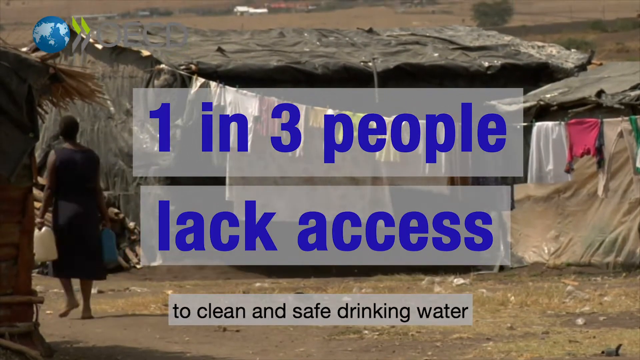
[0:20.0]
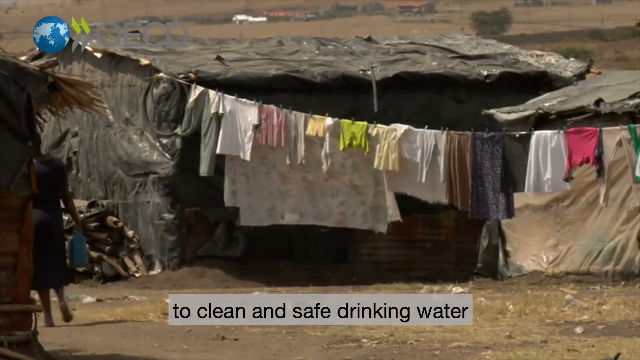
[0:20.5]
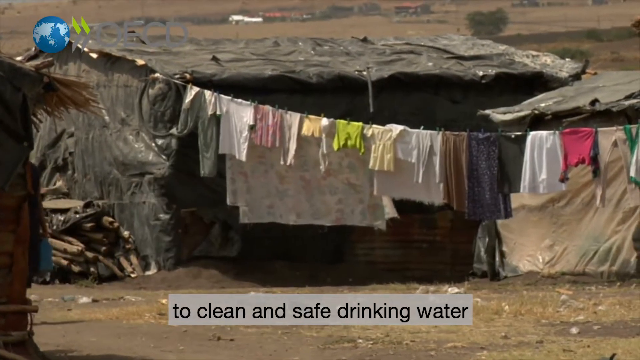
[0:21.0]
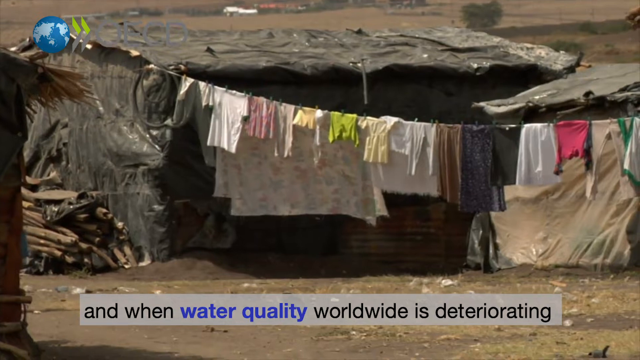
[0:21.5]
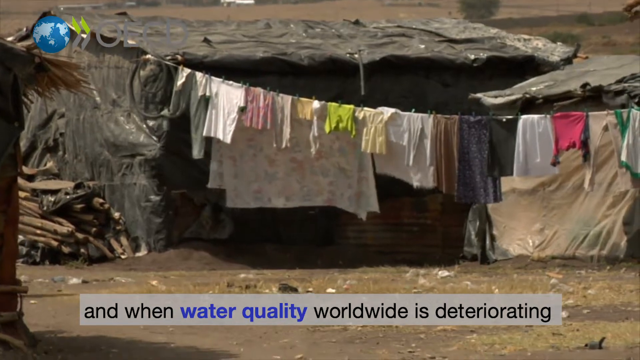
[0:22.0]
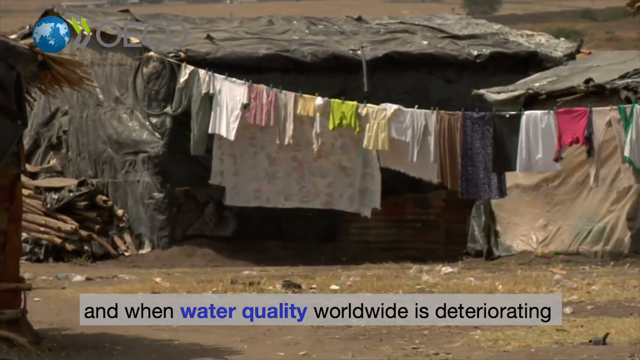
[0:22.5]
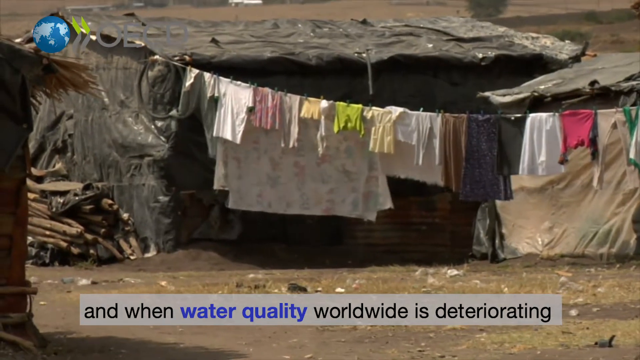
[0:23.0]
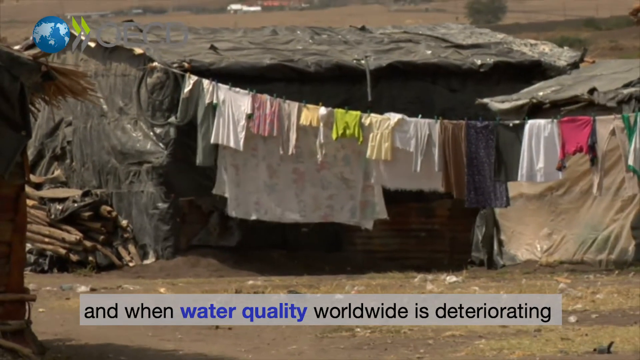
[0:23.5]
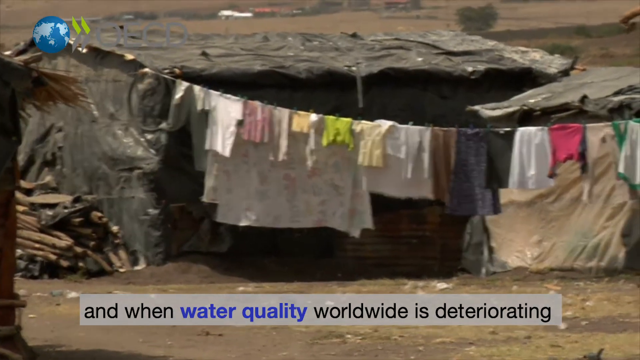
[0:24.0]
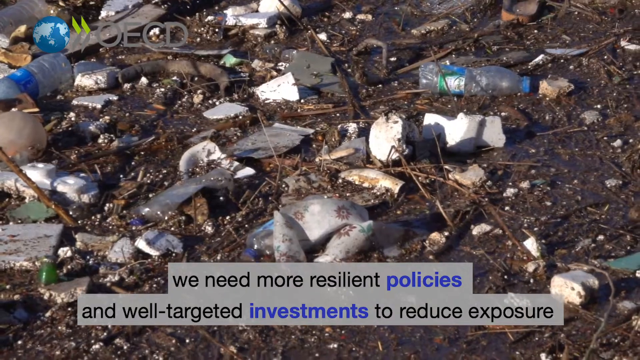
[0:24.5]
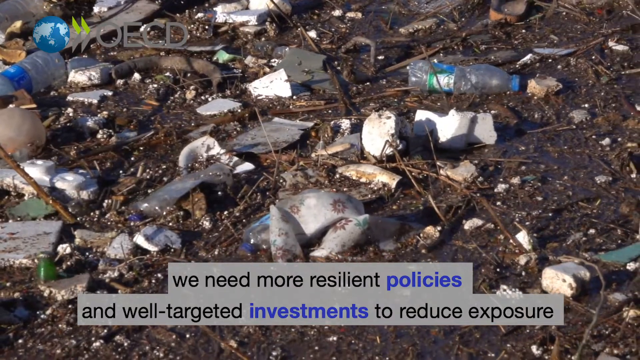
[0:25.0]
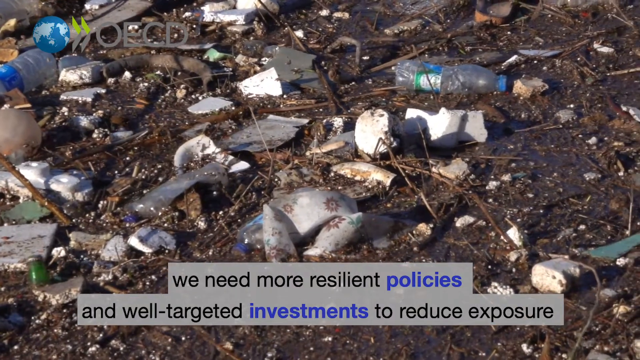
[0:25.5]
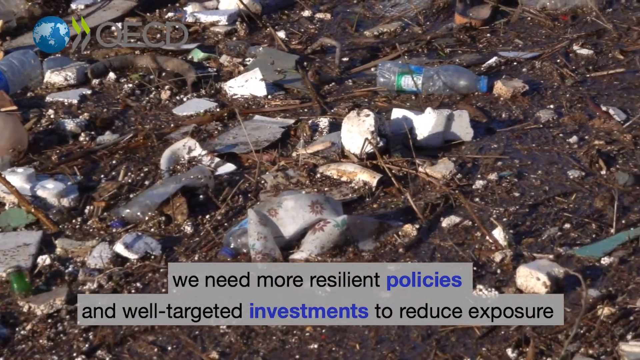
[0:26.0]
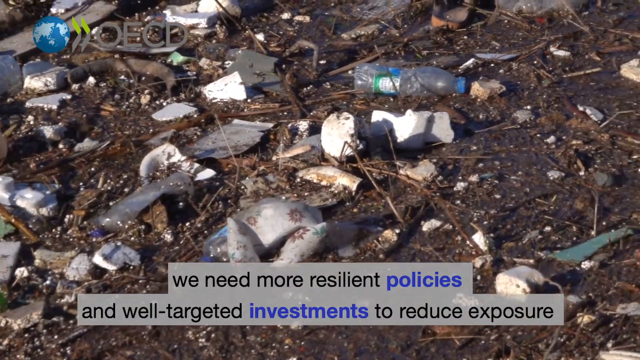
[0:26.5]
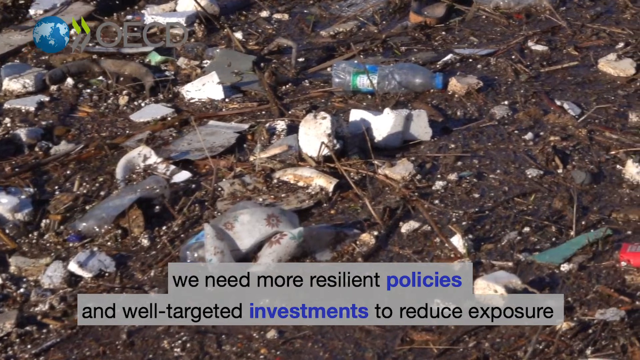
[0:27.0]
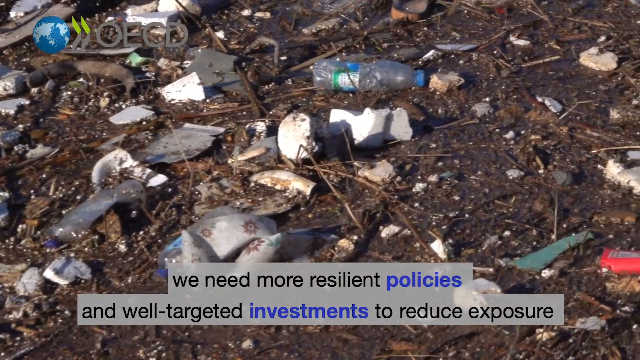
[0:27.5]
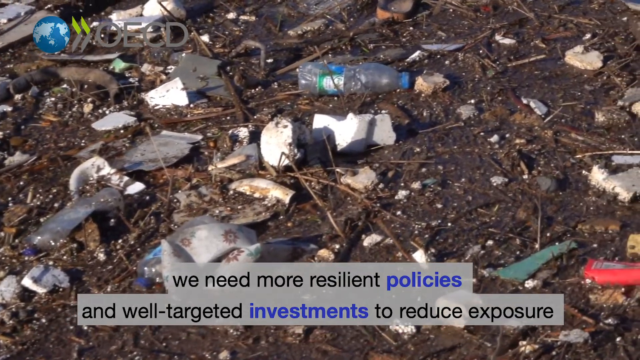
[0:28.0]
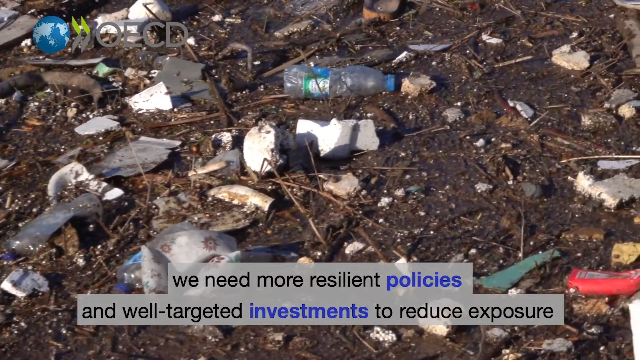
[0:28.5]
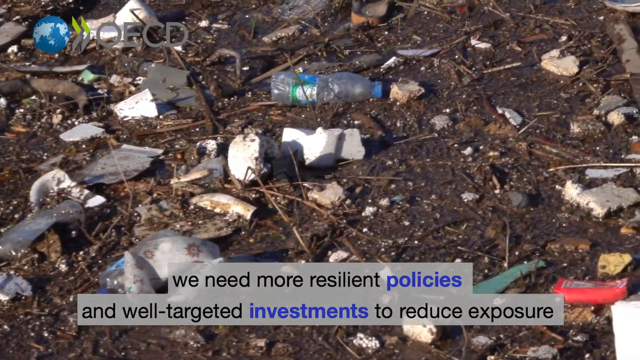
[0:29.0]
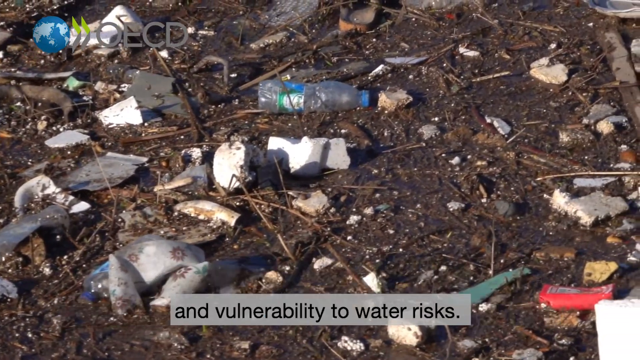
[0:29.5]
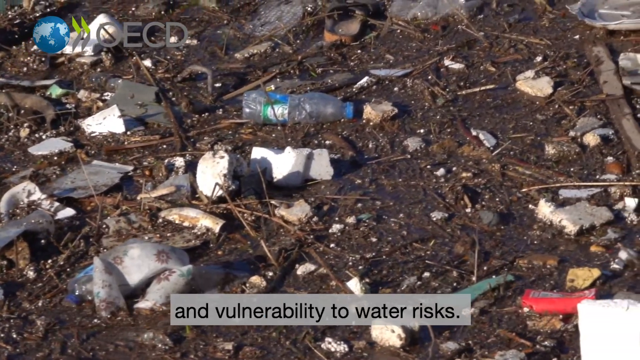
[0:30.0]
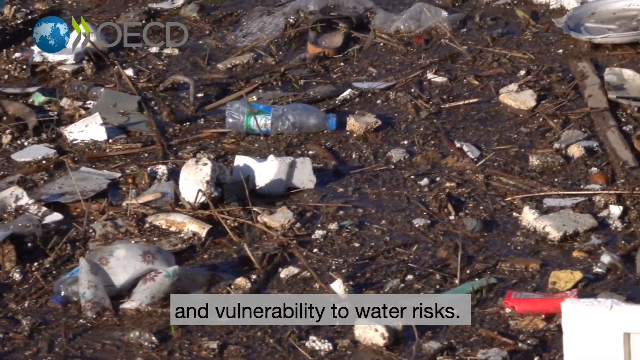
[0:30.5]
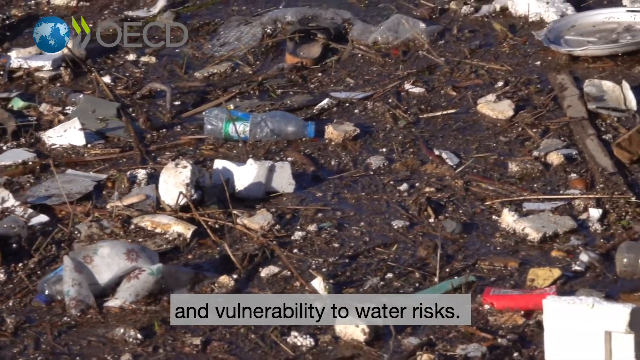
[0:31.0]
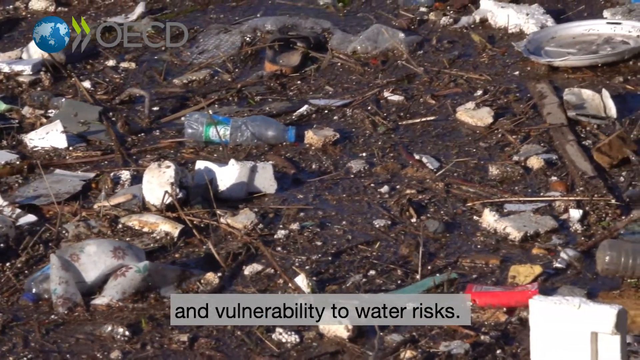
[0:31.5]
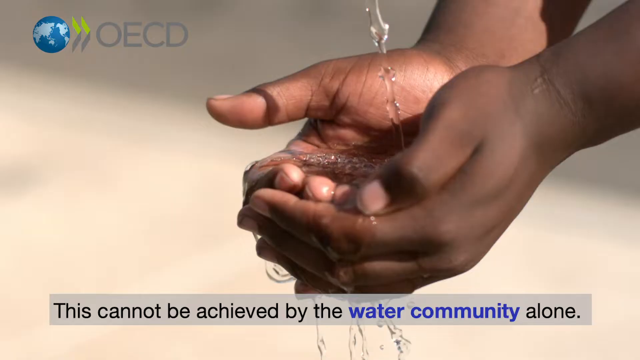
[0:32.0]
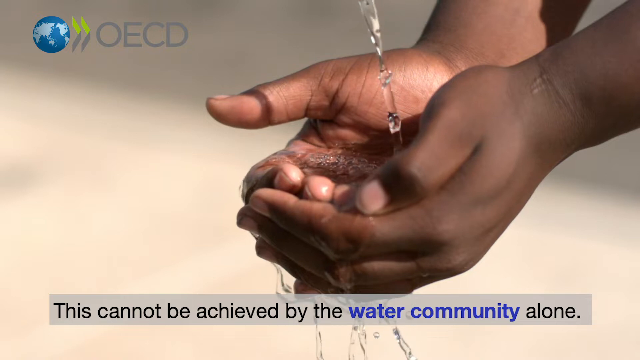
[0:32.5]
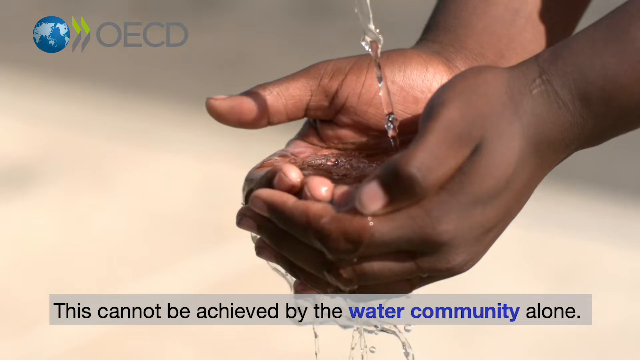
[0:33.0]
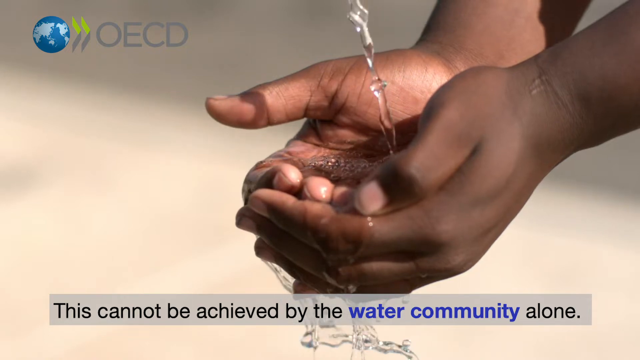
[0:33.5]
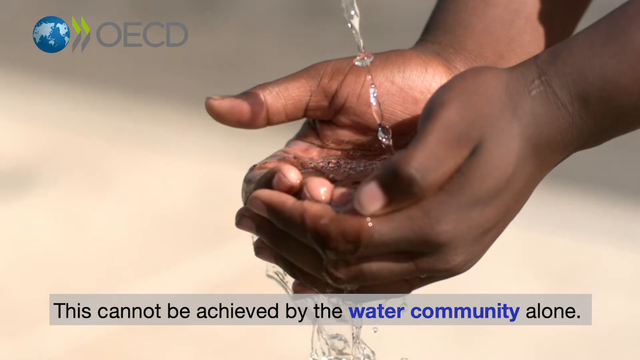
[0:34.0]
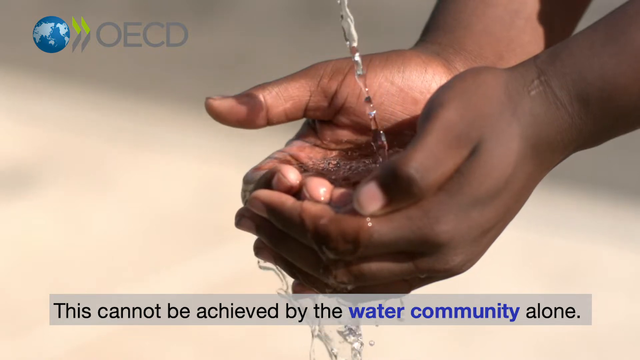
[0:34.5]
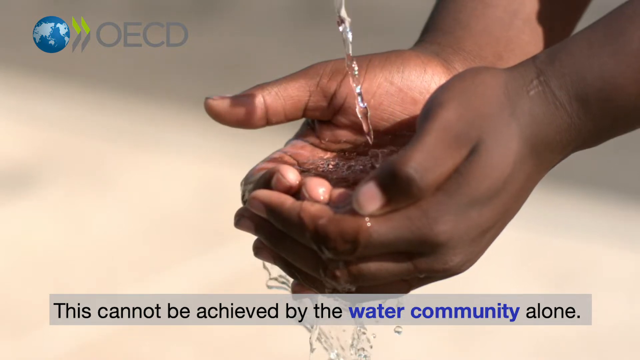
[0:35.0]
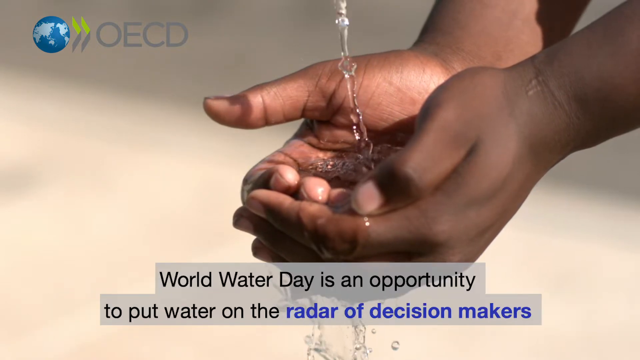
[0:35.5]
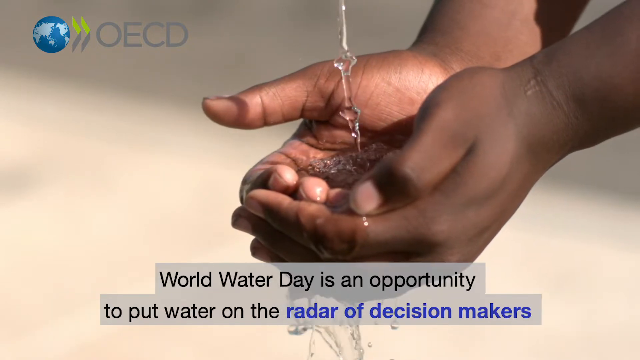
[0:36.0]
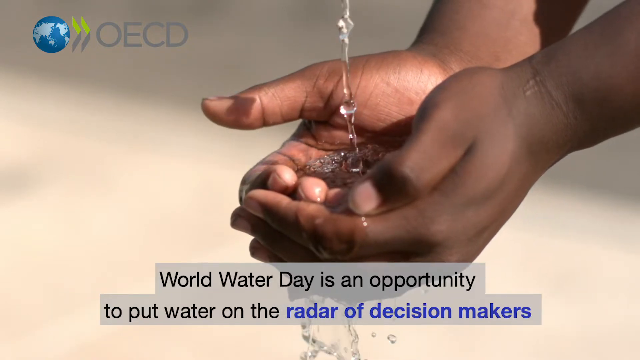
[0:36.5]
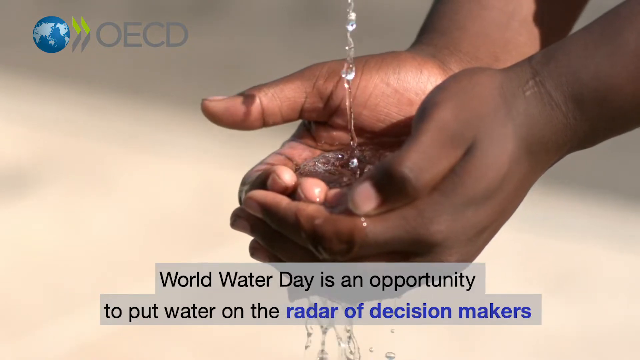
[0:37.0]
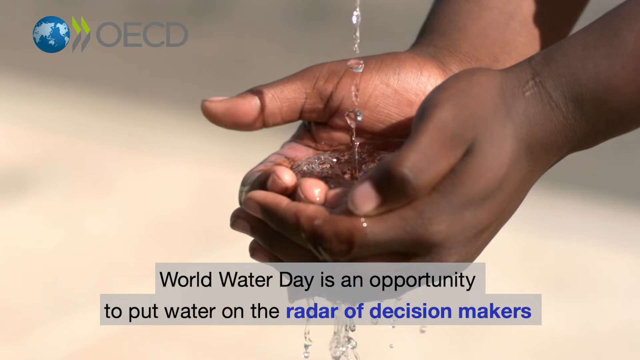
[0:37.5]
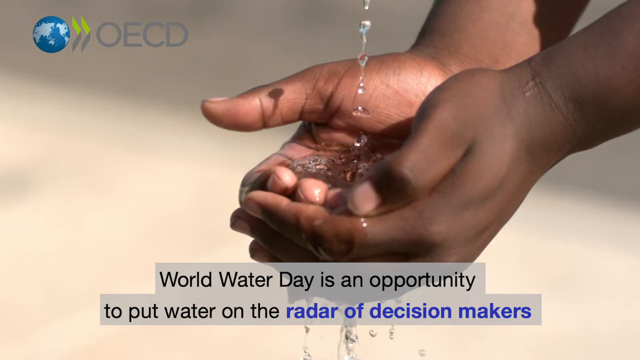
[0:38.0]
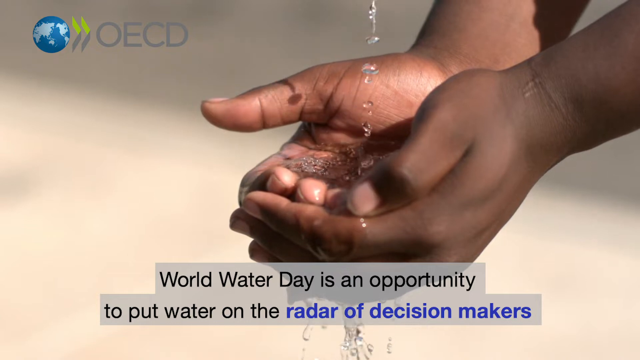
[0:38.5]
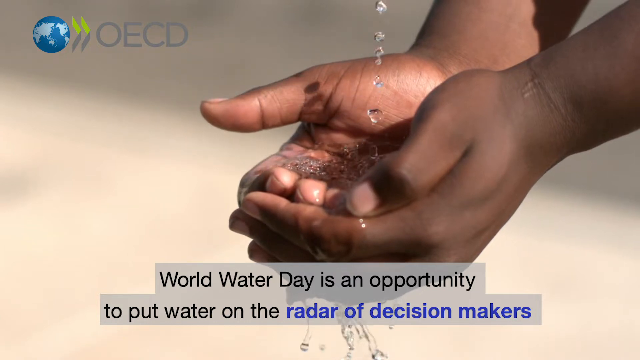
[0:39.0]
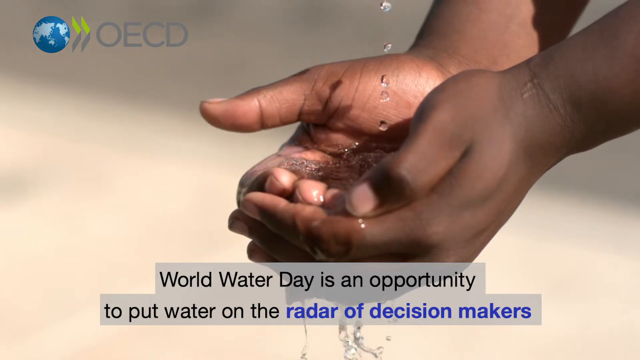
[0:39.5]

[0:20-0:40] Text states that one in three people lack access to clean and safe drinking water, as a lady carries several water canisters in a poor rural area. Text then mentions that this is happening at a time when water quality worldwide is deteriorating. A slide appears set against pollution shown outside, mentioning that more resilient policies and well-targeted investments are needed to reduce exposure and vulnerability to water risks. Someone holds their hands out as water is poured into them, with a message beneath reading "this cannot be achieved by the water community alone. World Water Day is an opportunity to put water on the radar of decision makers."